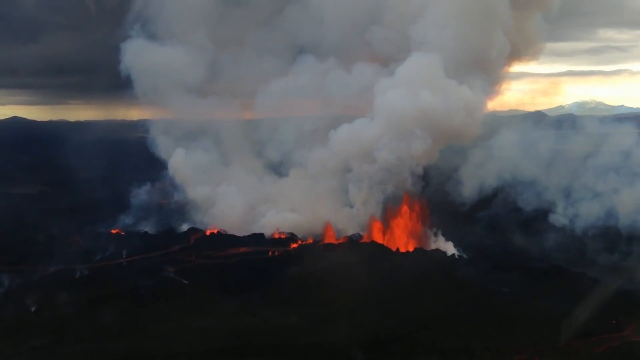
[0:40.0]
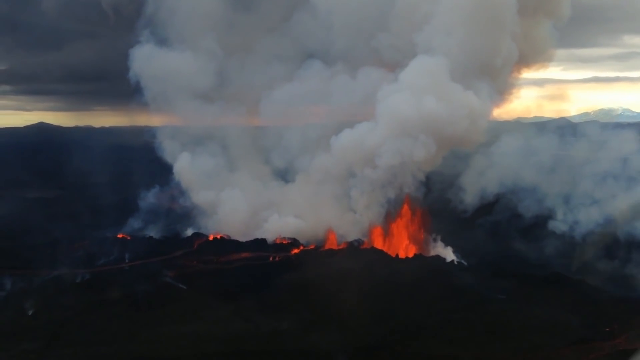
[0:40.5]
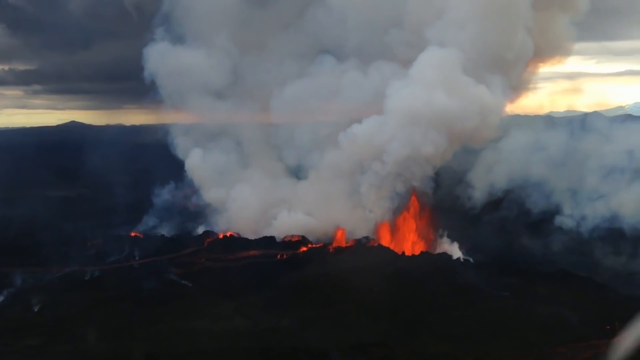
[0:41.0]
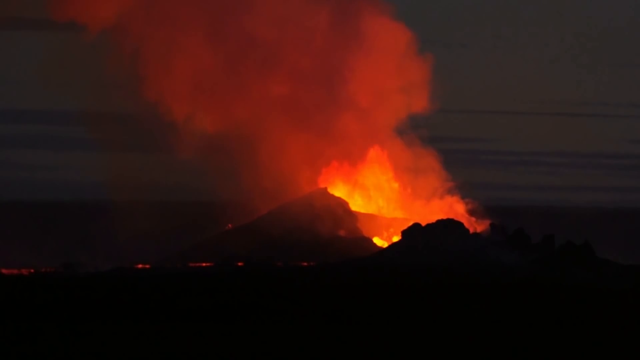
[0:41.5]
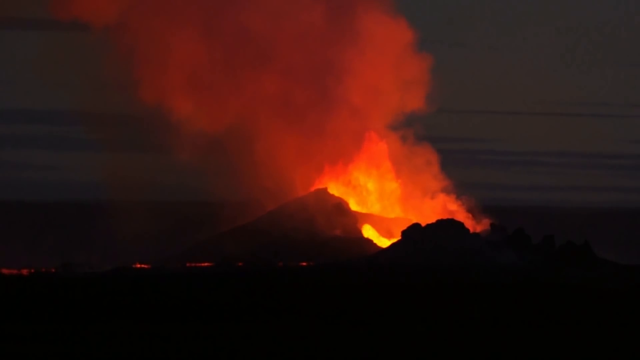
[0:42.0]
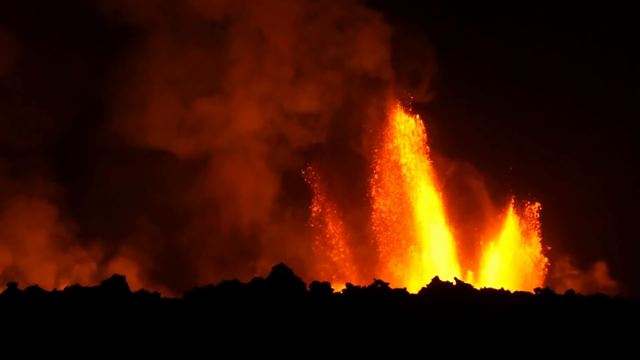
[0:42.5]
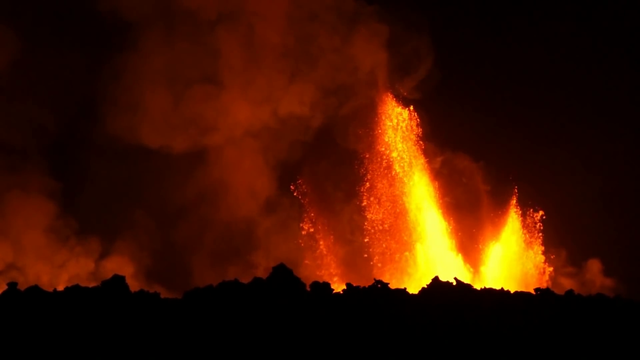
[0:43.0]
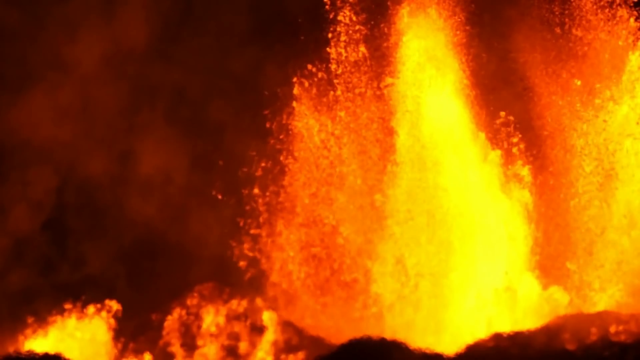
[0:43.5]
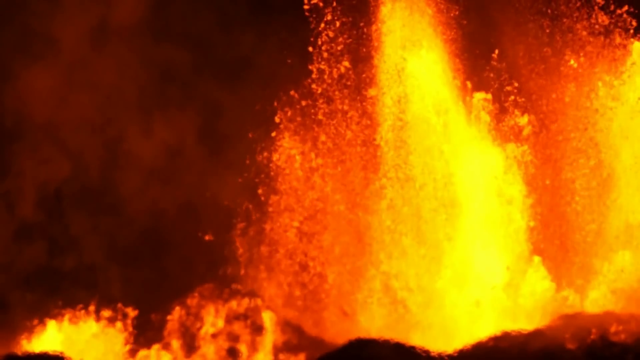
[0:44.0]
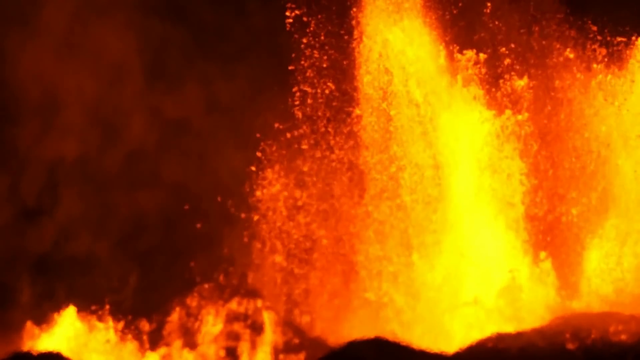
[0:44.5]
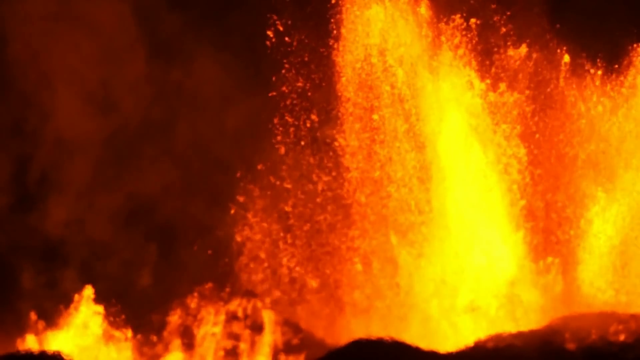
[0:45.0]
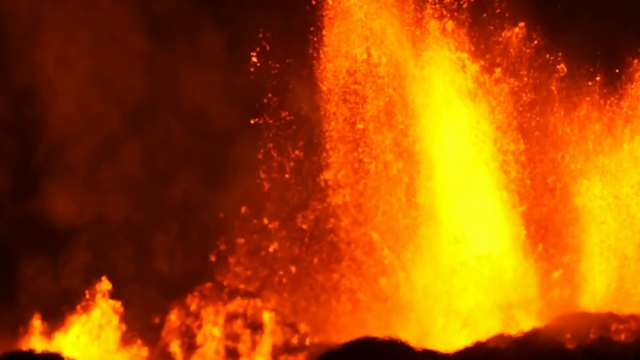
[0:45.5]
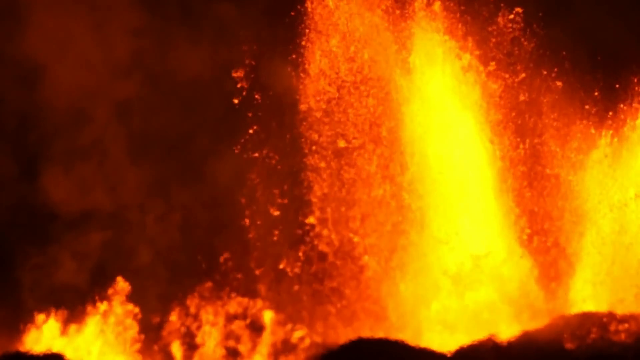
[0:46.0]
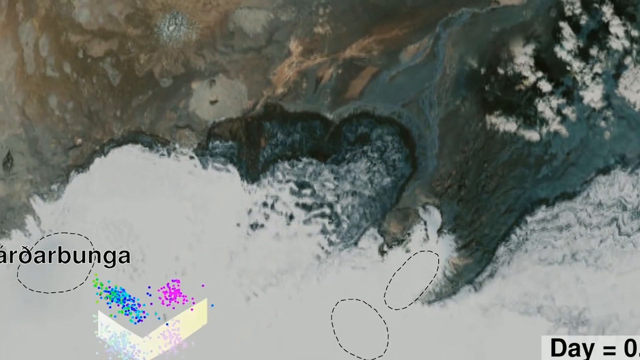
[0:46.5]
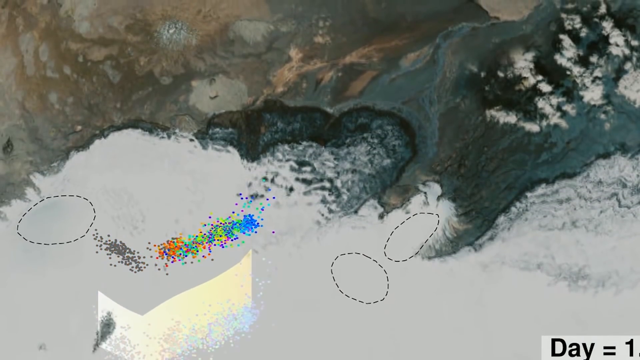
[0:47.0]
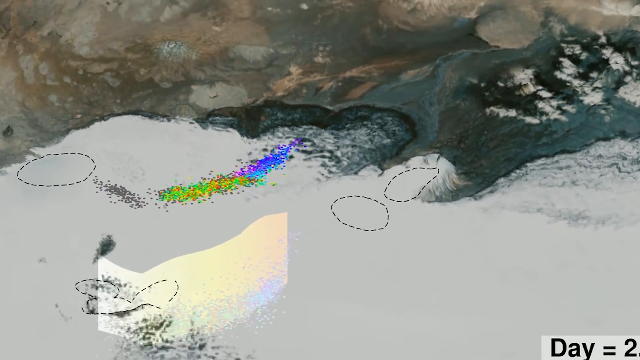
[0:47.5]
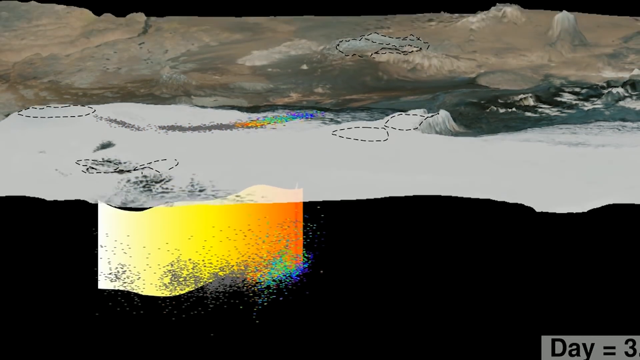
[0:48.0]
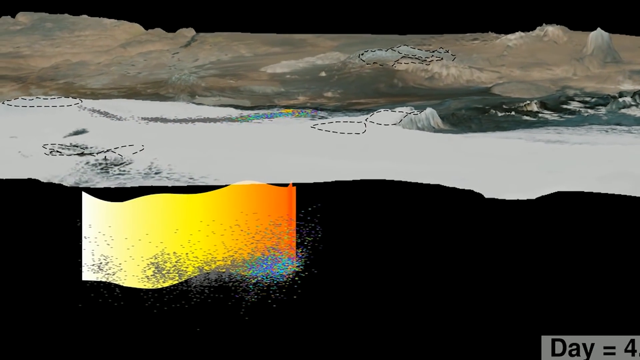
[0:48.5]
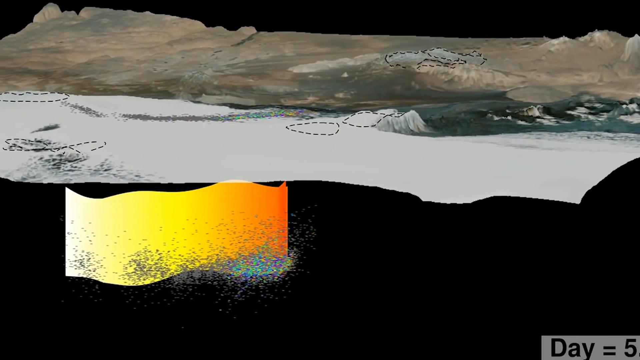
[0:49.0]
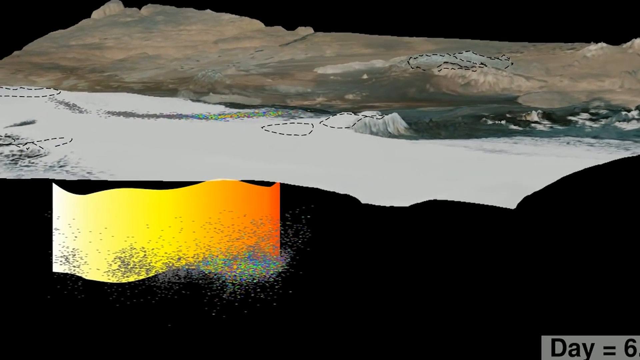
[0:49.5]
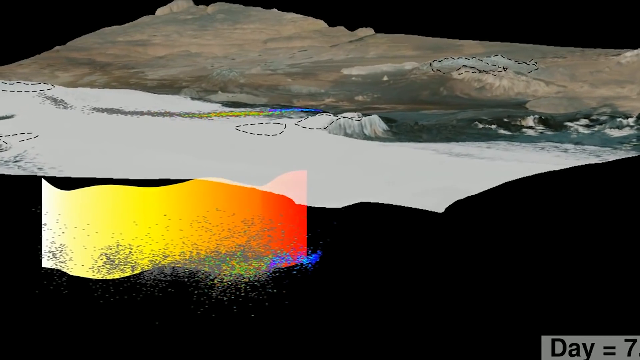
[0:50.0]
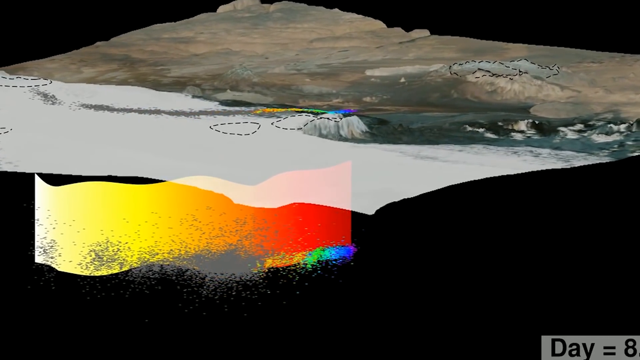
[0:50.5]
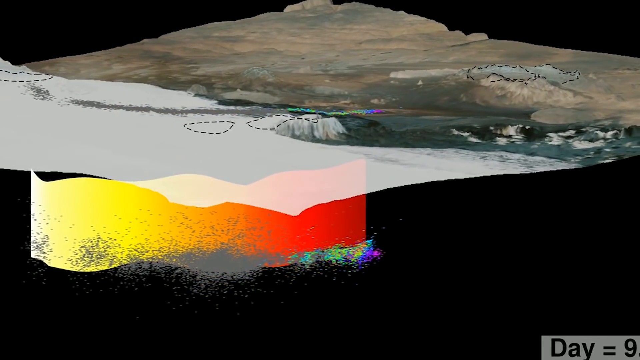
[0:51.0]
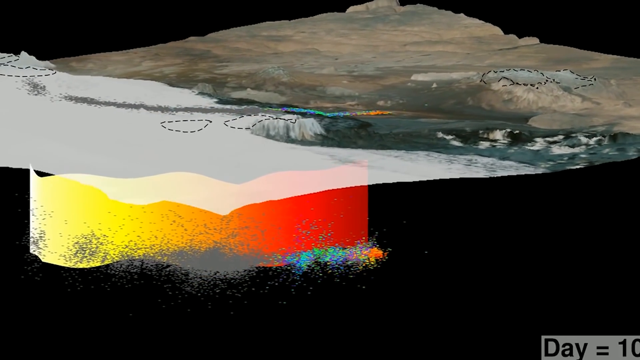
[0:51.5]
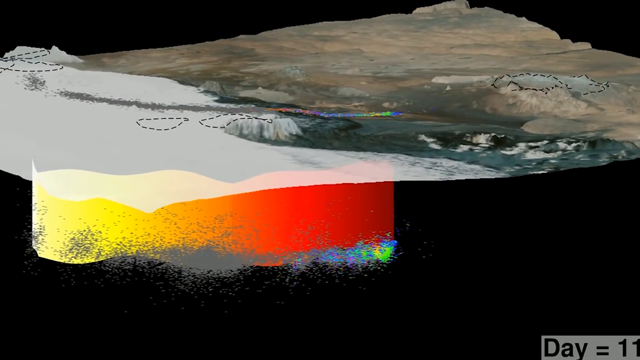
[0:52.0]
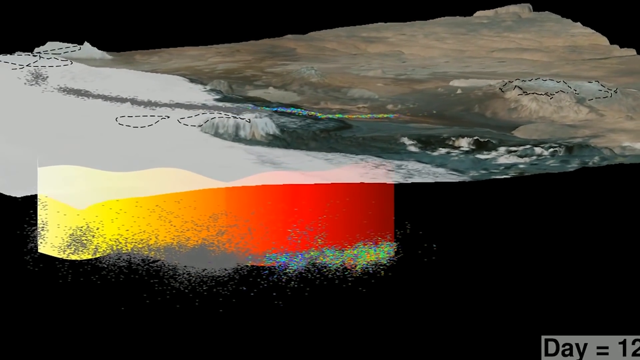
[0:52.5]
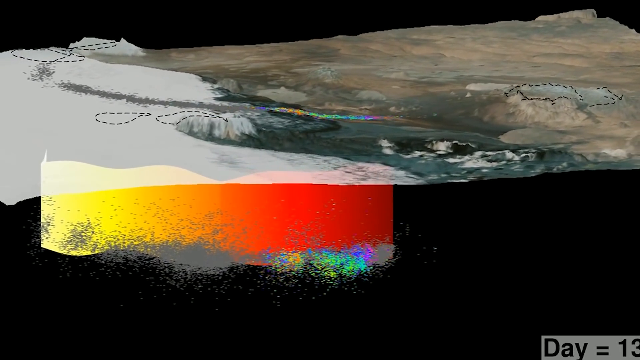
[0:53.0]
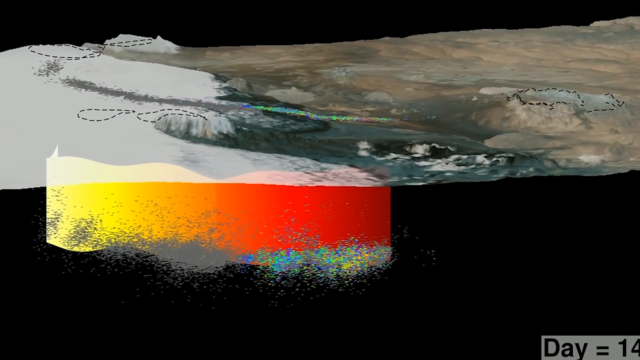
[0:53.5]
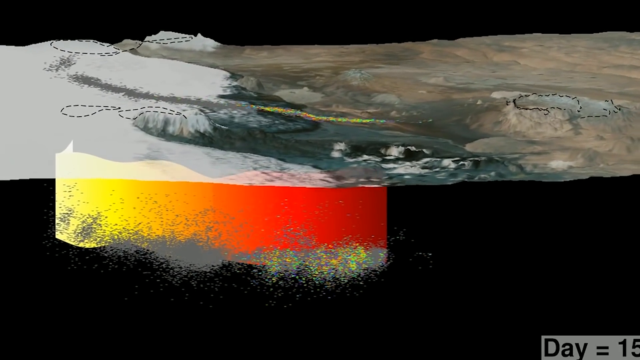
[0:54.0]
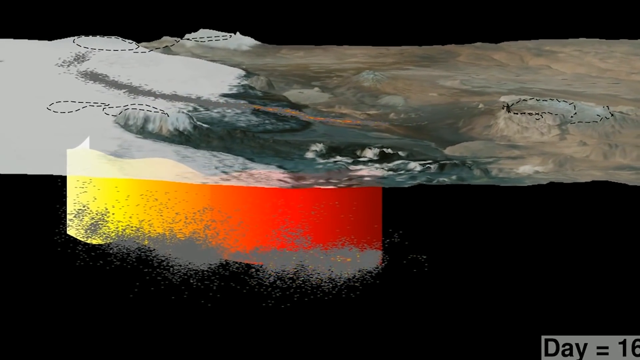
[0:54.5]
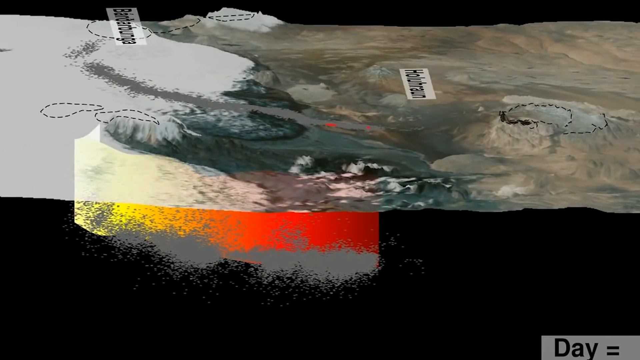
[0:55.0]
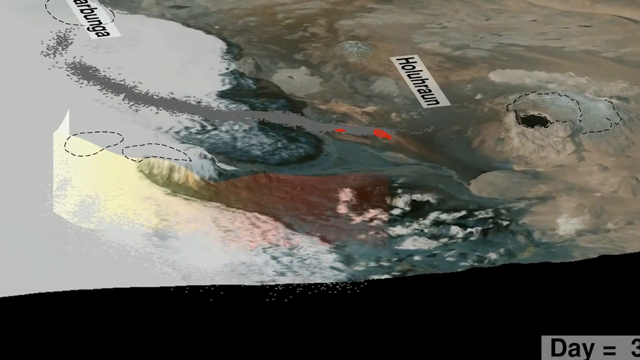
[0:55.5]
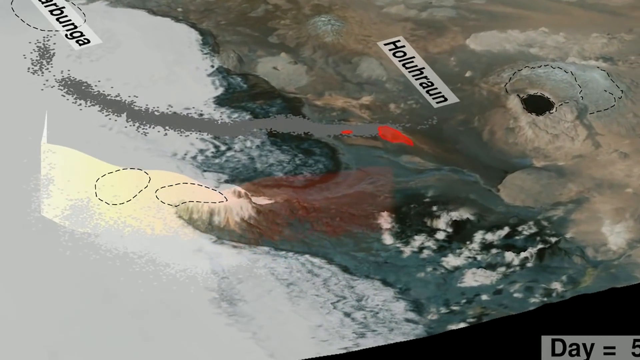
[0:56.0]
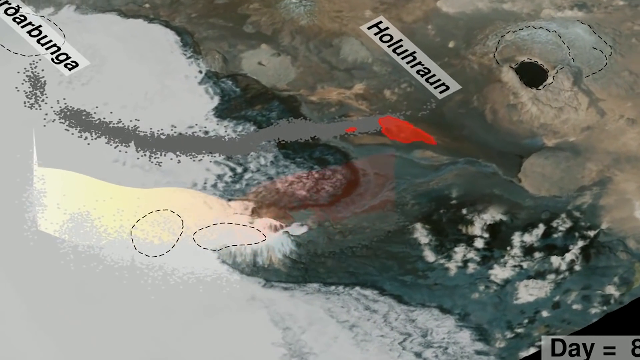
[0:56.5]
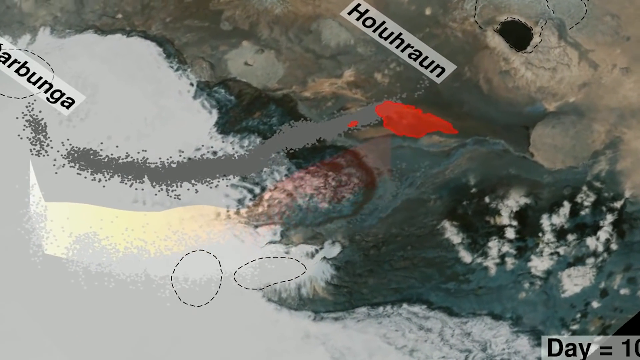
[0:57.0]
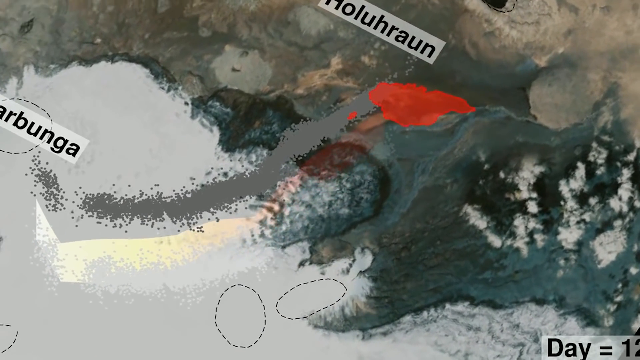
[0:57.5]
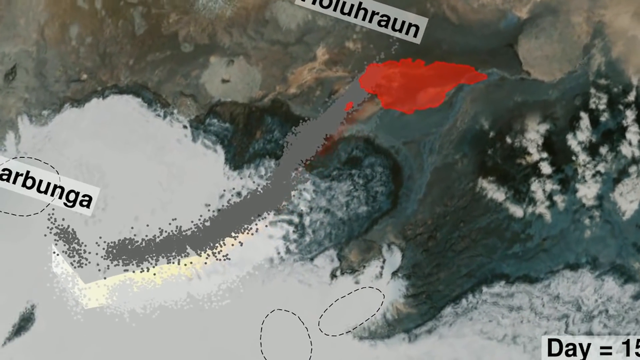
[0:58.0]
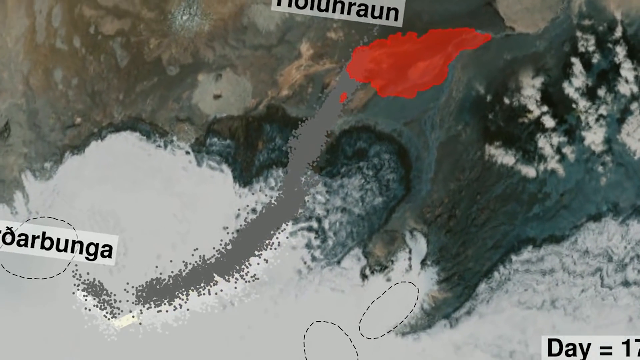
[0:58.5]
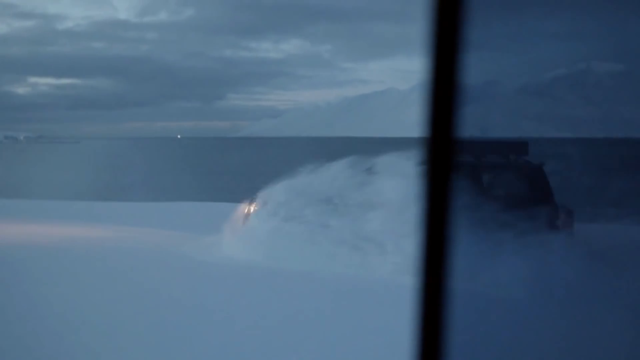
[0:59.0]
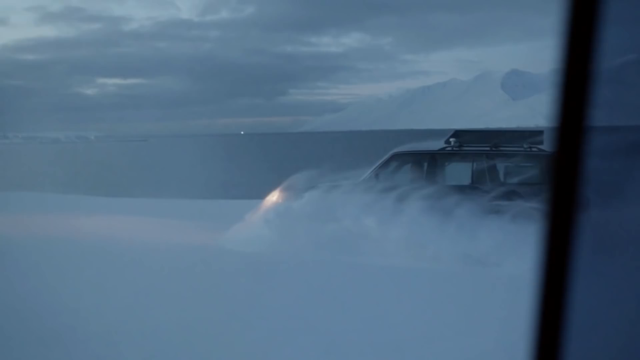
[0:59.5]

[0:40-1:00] The top of the mountain is seen from far away, with flaming lava and white smoke. The video moves back to a night image of the top of the mountain with flaming lava and orangey smoke. The camera shows all the lava erupting from the side of the mountain going upwards, then zooms in on the exploding lava, with yellow and orange dominating the scene. The camera then moves to a 3D map showing the underground where the lava is located. The map rotates swiftly, and the affected area is shown with the name "Holuhraum"; in the far left corner there is another name that cannot be read. Then a car speeds along a road, lifting up the debris on the ground. The car, which has its headlights on, is barely visible.